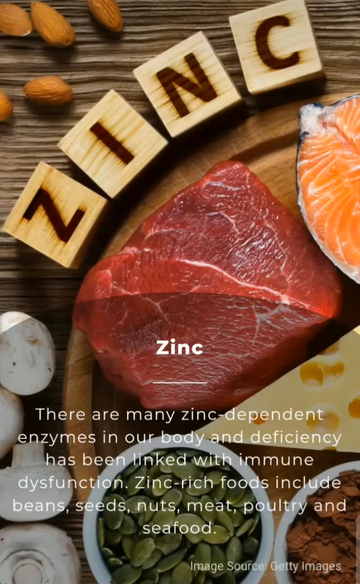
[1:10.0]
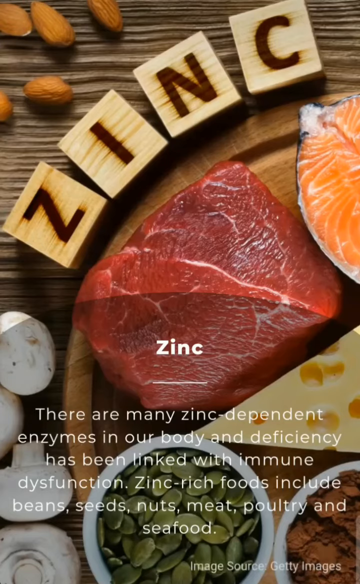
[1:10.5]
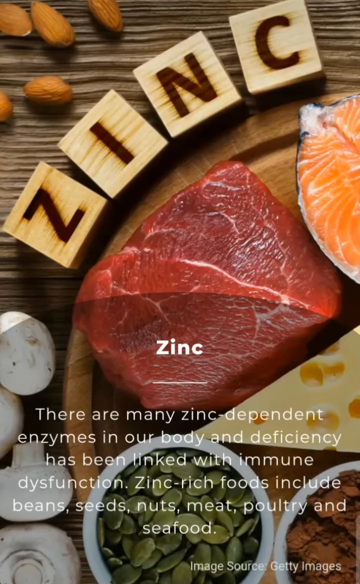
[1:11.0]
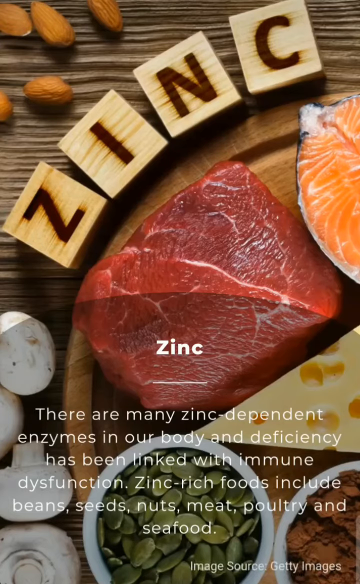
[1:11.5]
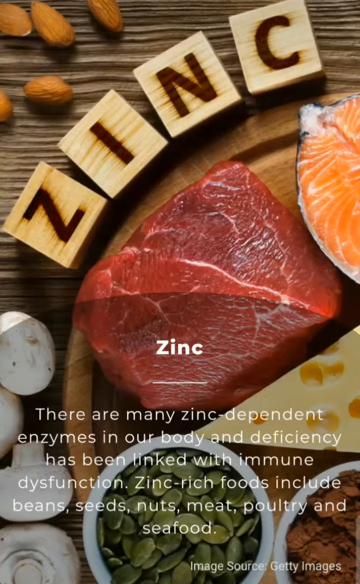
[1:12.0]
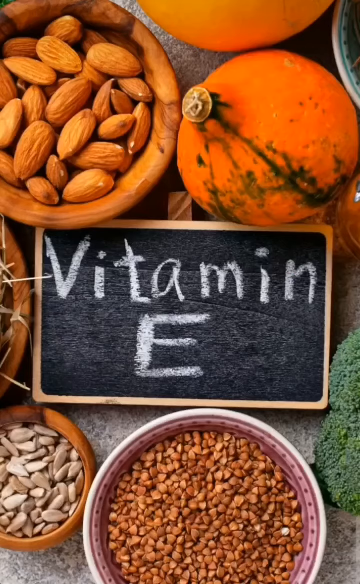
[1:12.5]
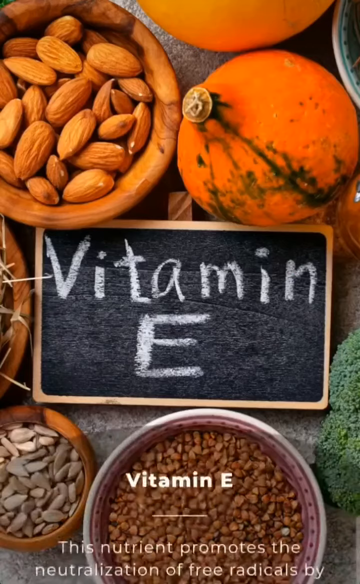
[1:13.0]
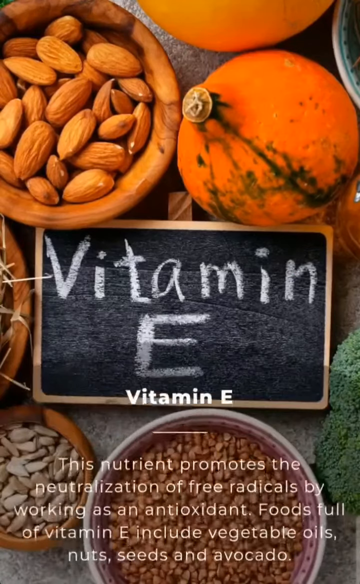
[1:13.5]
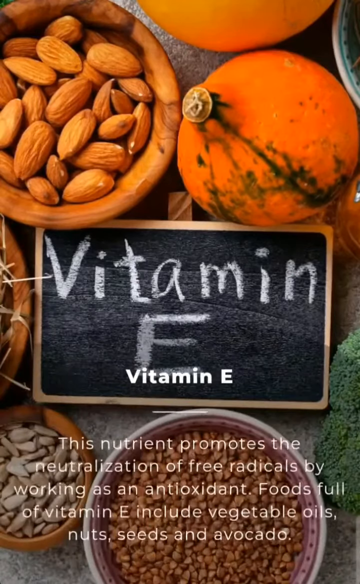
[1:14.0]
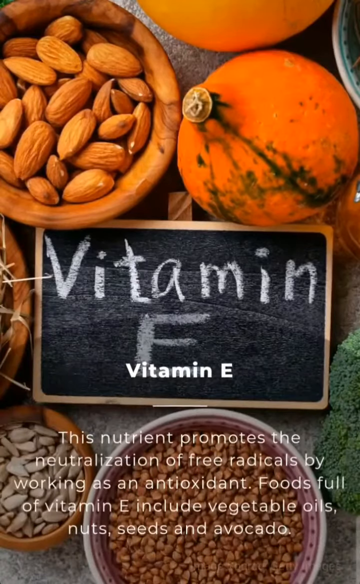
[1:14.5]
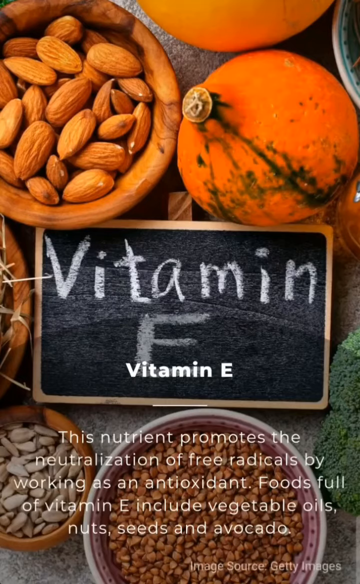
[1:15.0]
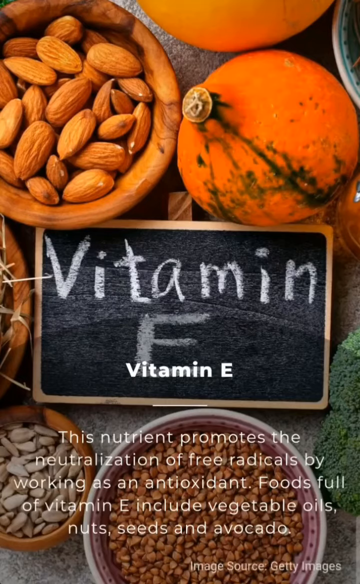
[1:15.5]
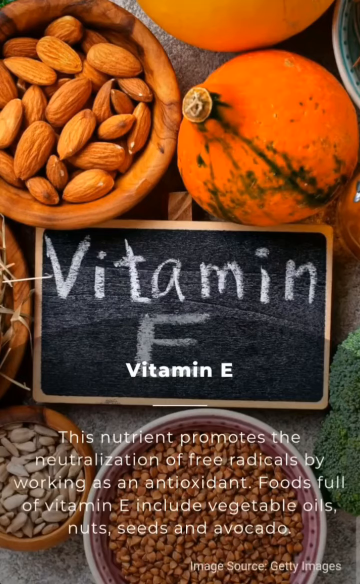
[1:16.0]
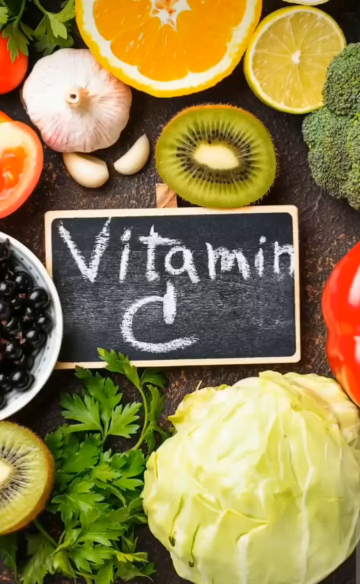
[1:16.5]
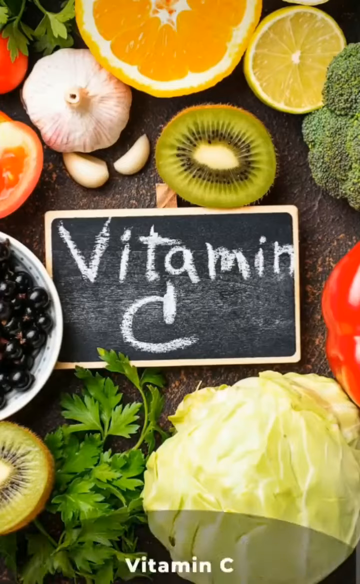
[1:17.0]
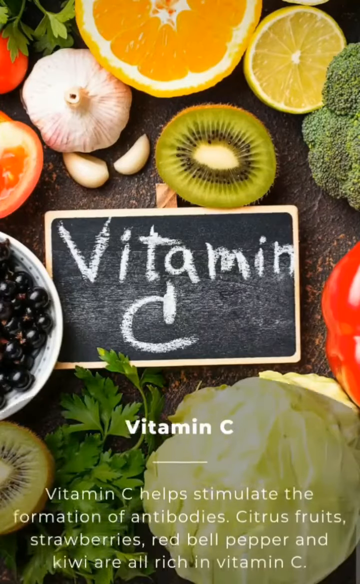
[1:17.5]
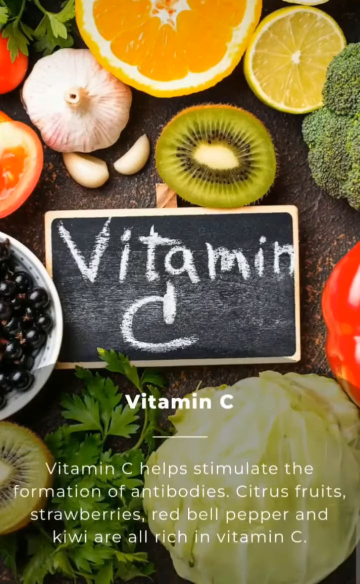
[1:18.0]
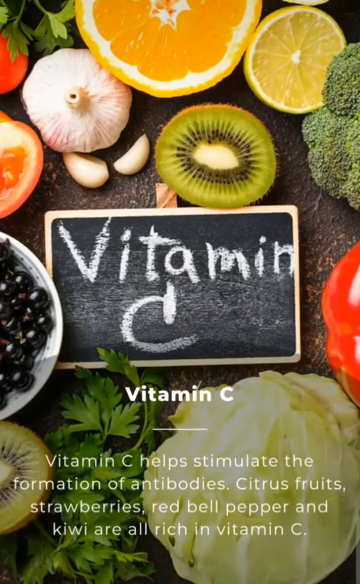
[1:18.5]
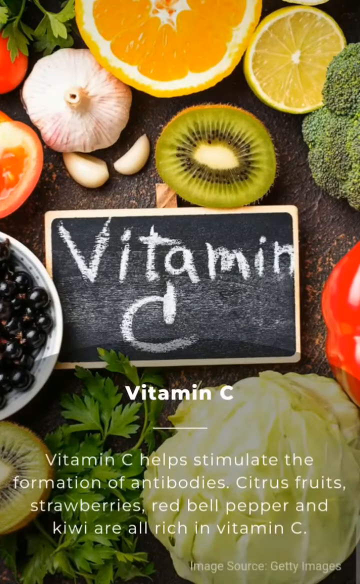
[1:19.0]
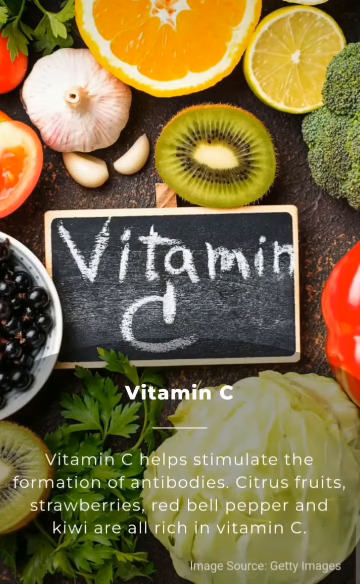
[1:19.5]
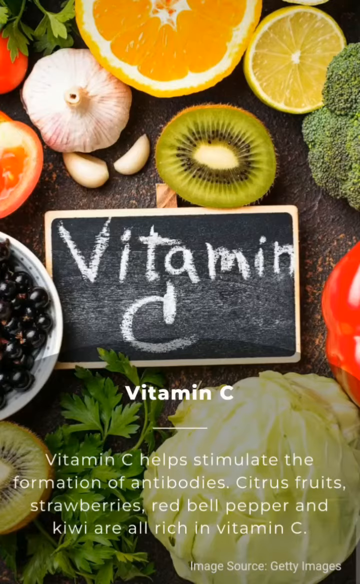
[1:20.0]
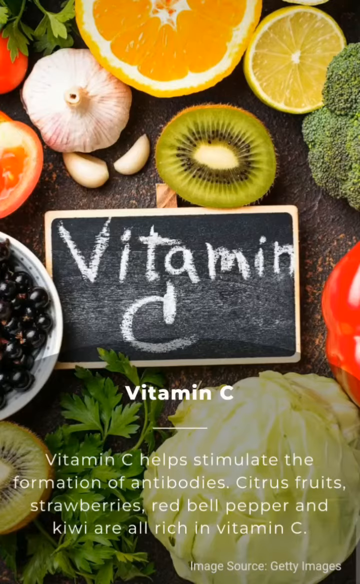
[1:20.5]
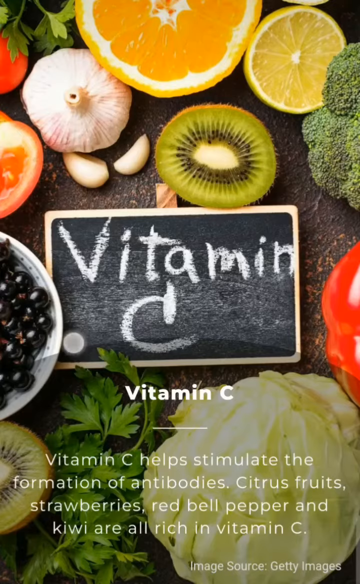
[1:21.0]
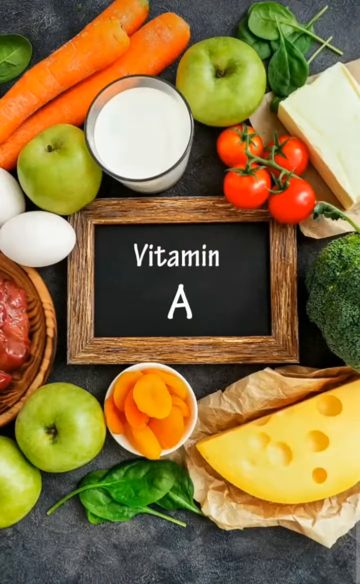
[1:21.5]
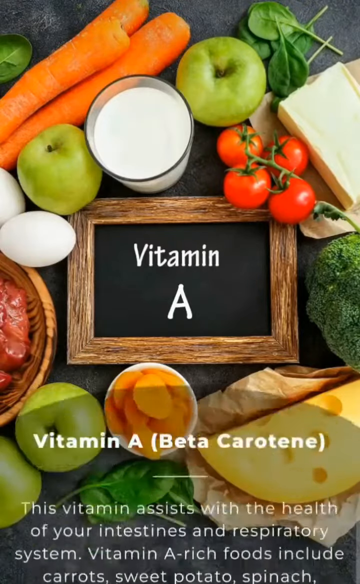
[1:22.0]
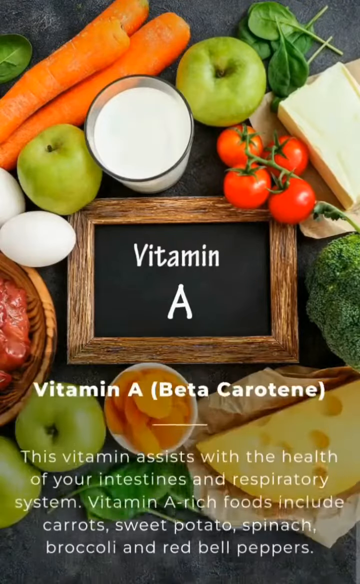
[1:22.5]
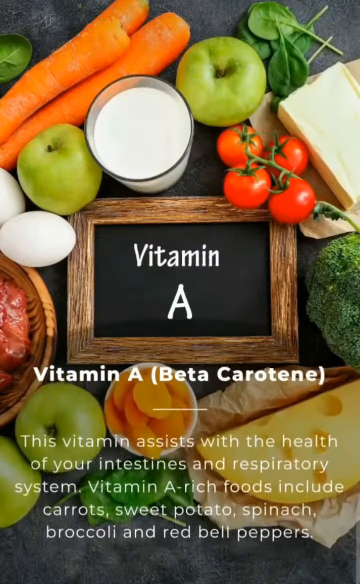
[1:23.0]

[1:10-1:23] The video appears to start with the zinc slide and then goes backwards through the slides already shown: from zinc back to vitamin E, then to vitamin C, and finally to vitamin A.